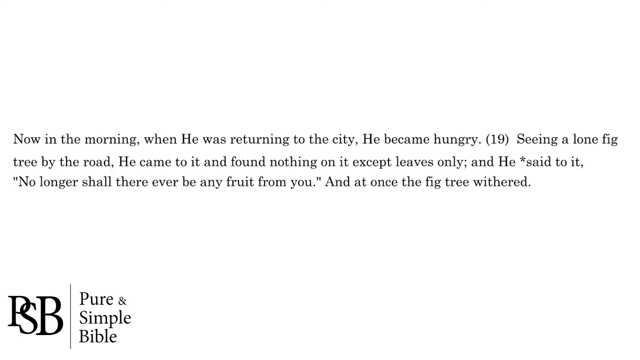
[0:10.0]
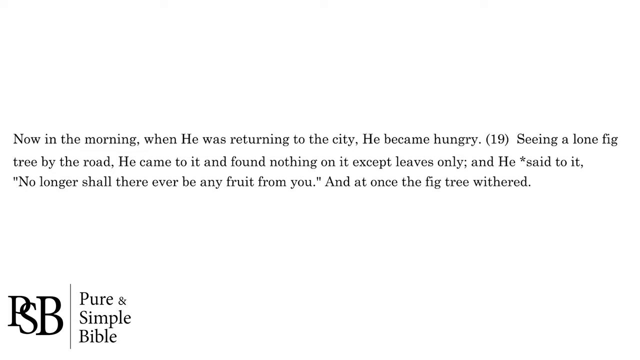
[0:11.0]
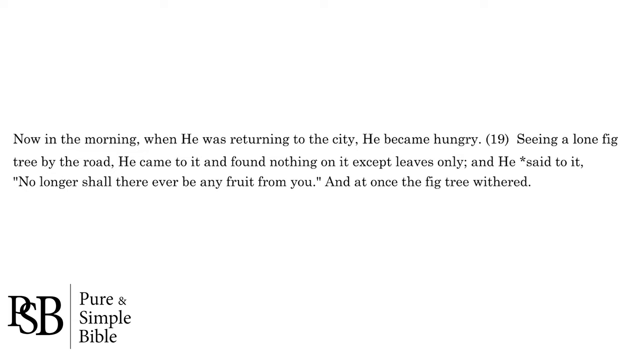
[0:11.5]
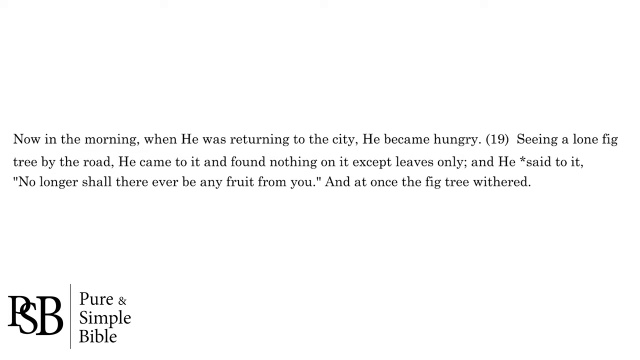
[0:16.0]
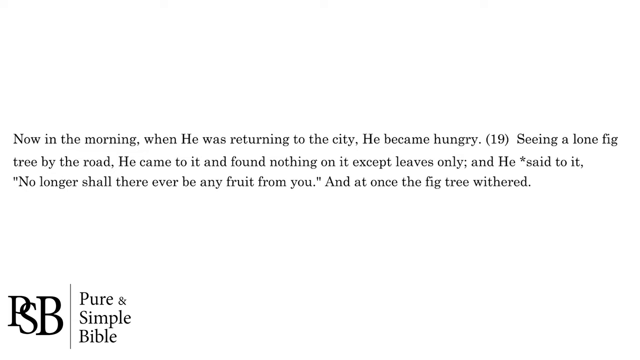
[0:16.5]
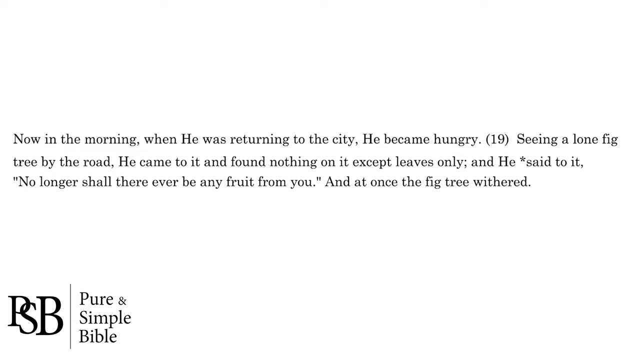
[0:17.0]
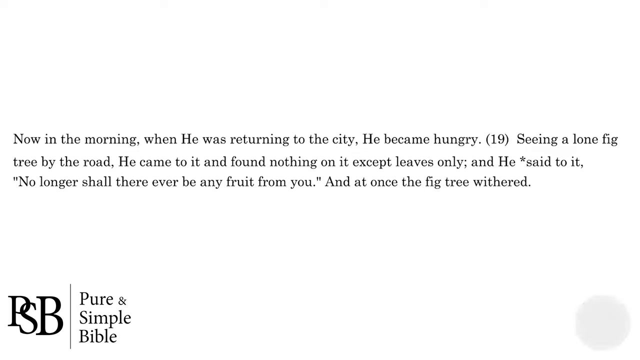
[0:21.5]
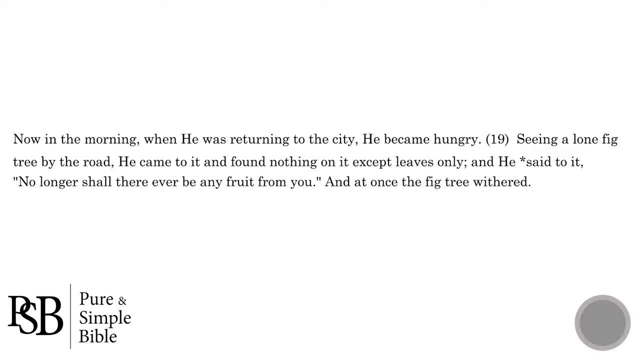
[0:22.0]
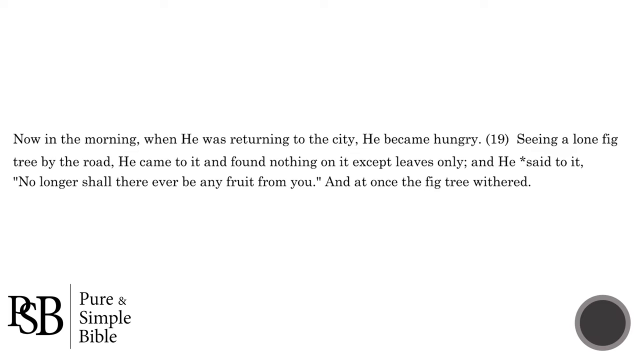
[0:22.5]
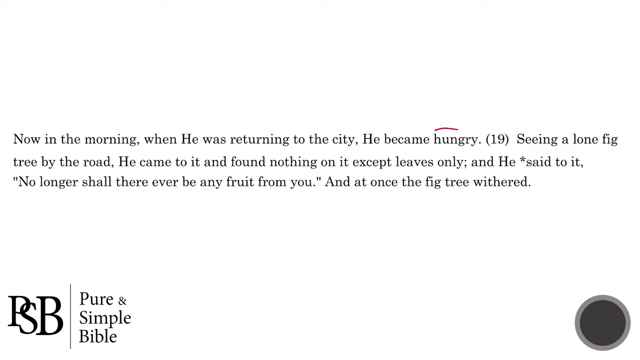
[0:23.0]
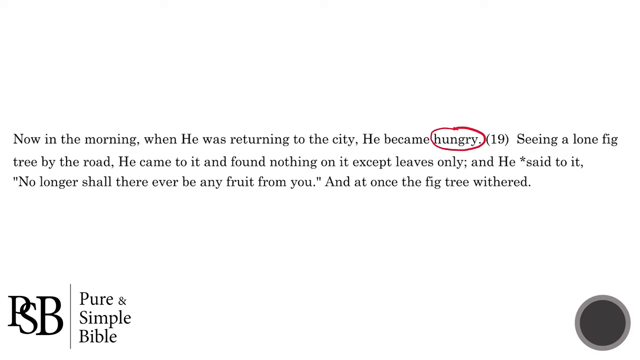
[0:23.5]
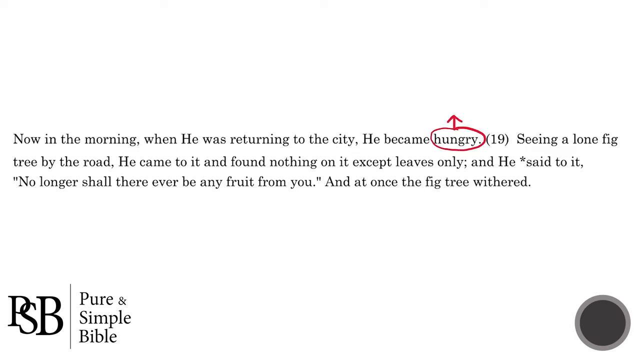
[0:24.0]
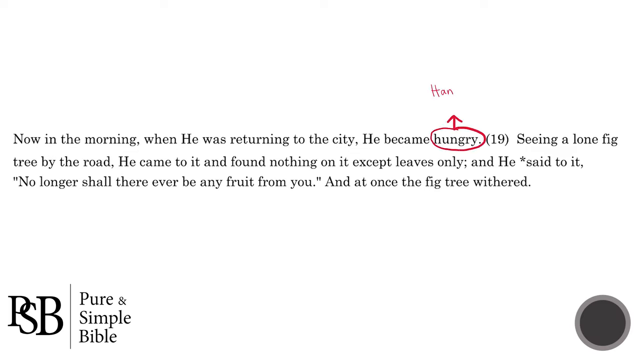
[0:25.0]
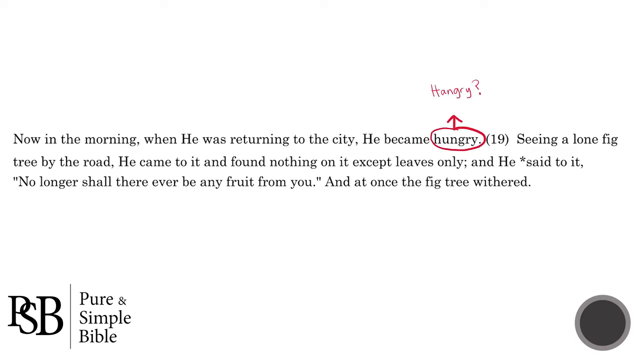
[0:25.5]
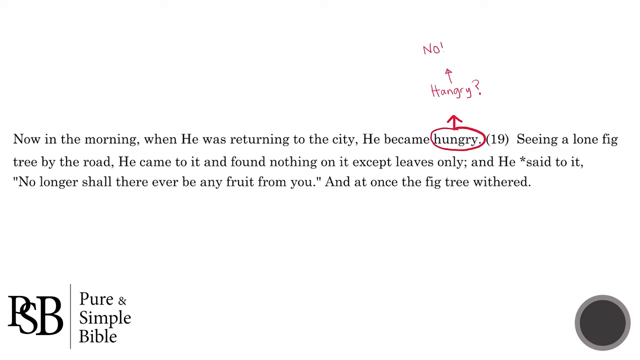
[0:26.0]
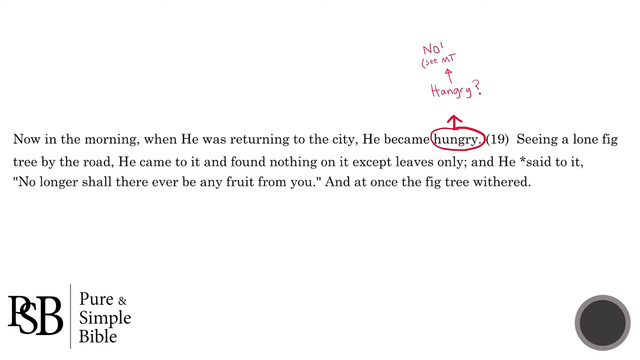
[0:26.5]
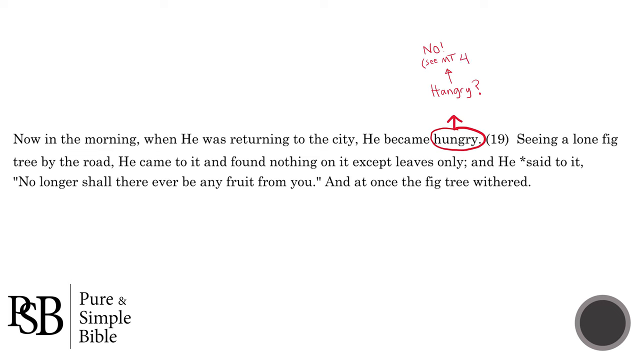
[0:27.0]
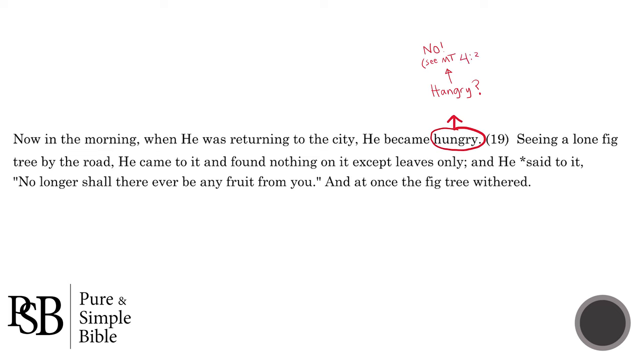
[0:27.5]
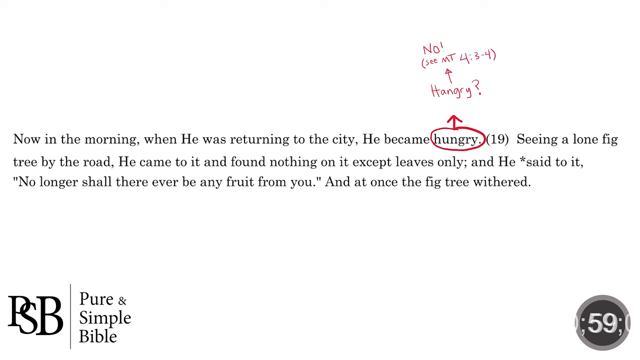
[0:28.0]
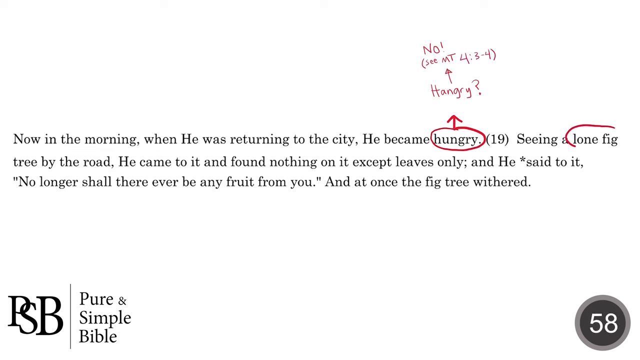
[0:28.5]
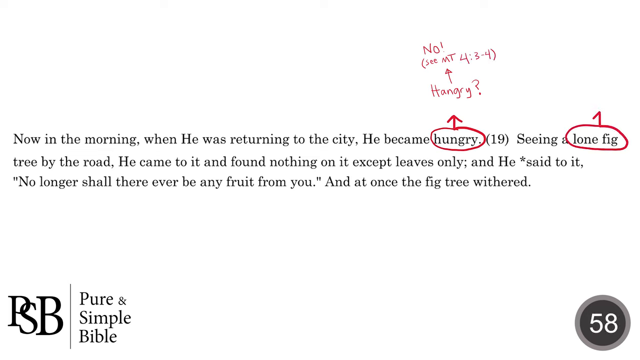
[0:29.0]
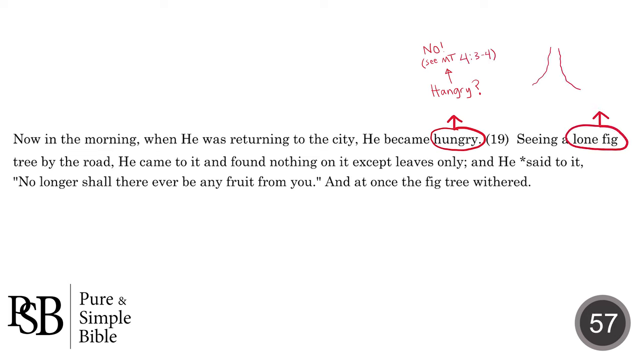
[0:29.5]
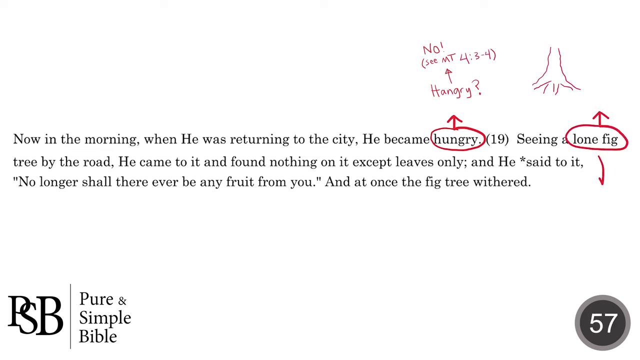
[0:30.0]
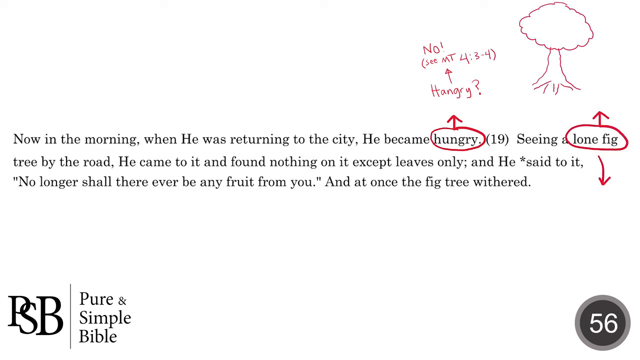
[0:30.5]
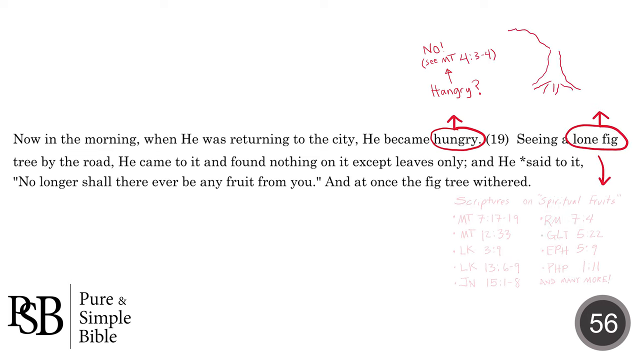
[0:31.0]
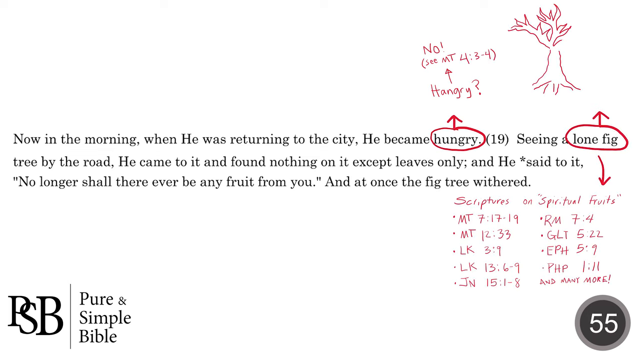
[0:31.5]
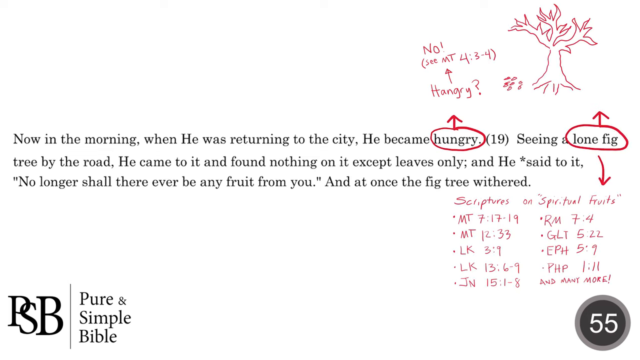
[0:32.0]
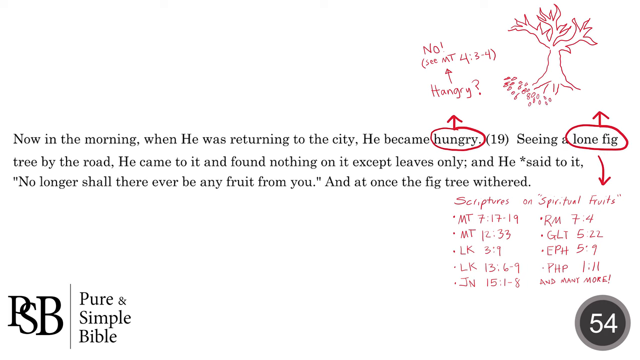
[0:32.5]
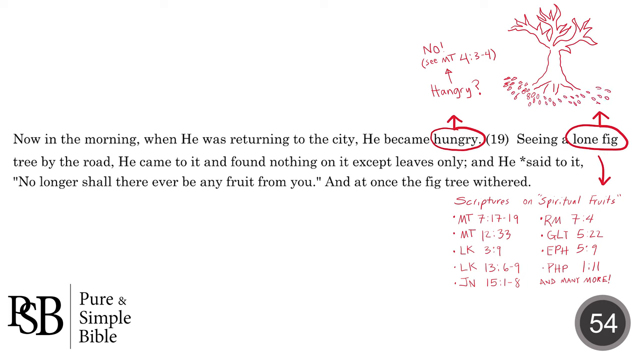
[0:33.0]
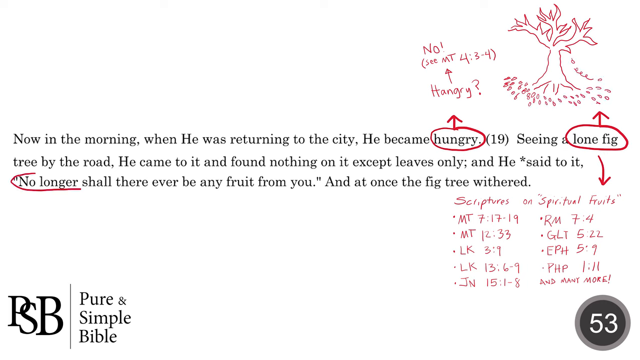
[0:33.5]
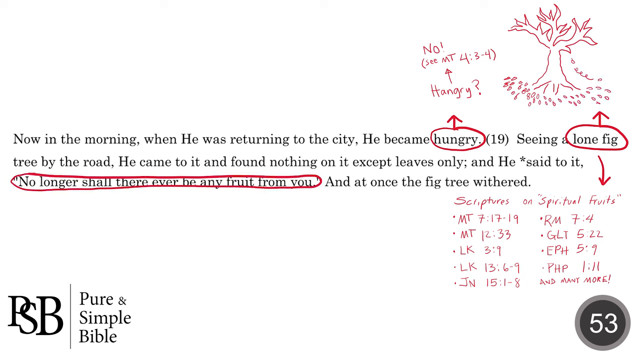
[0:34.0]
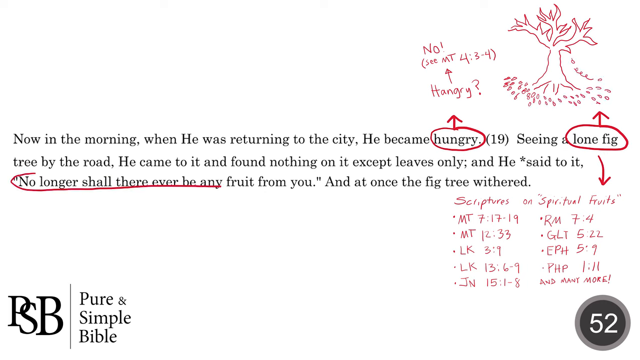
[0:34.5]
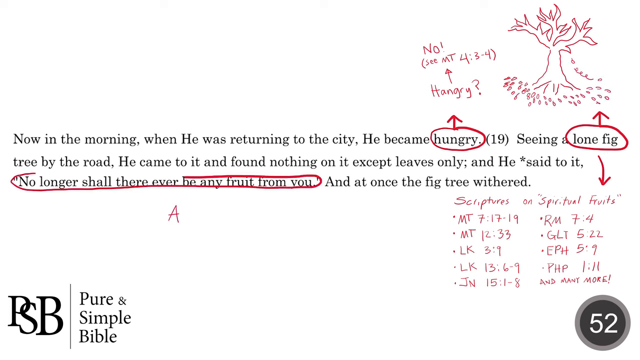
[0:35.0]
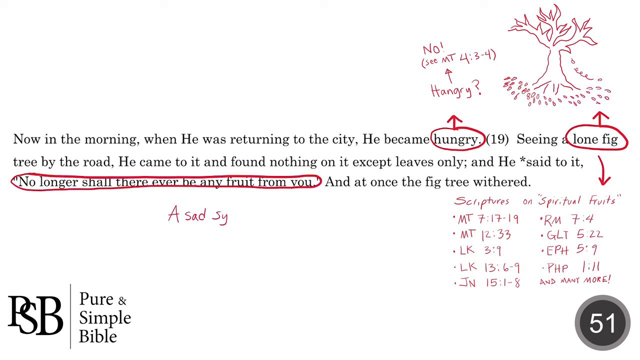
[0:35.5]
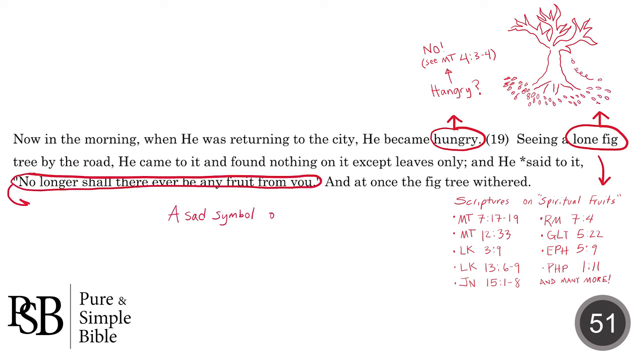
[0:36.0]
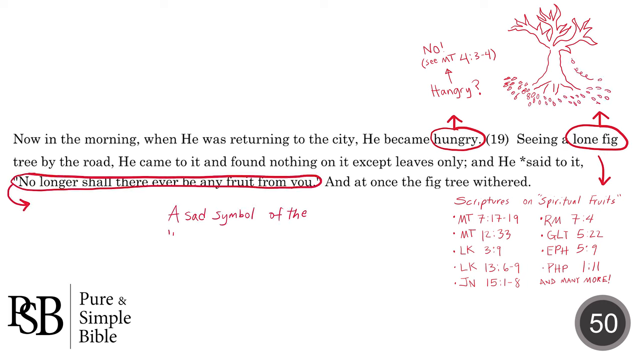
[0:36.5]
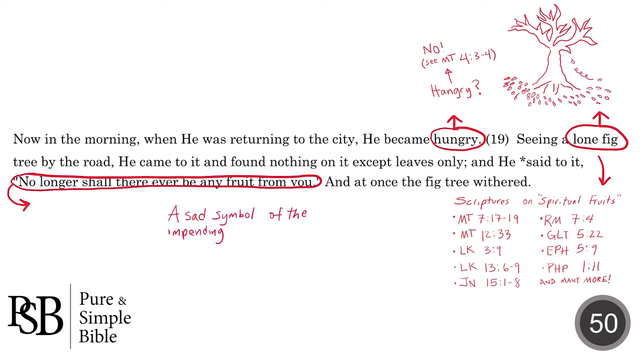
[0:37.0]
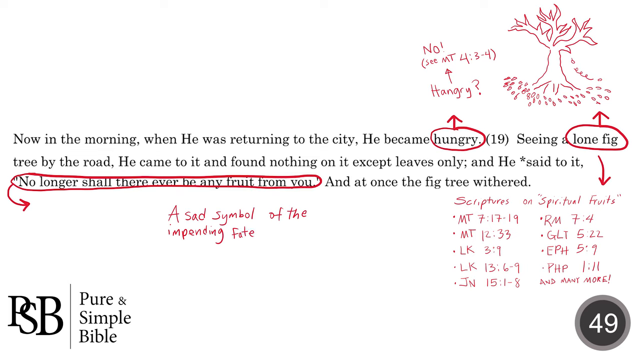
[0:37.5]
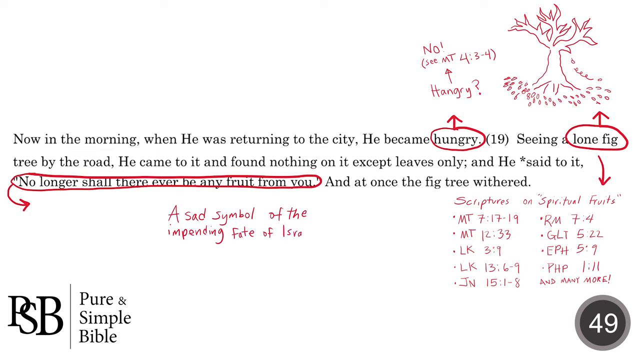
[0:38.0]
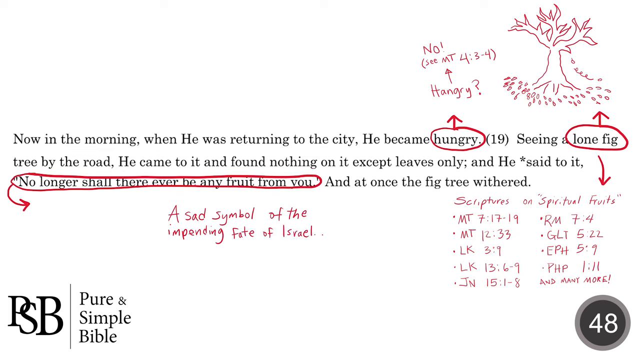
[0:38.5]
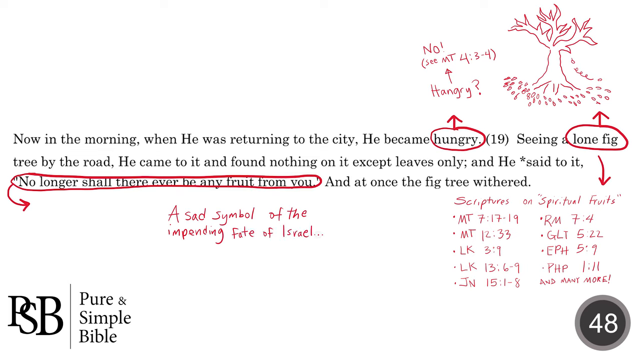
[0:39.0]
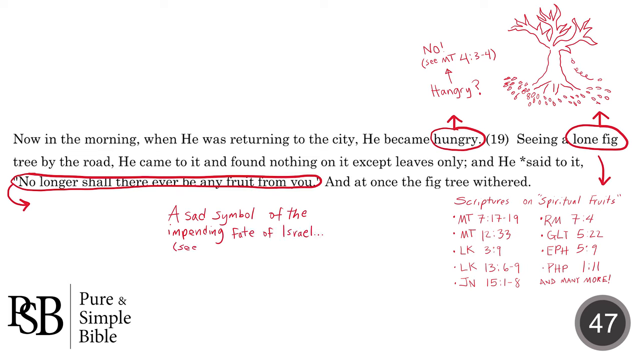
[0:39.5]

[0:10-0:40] The Bible passage remains on the screen, reading: "now in the morning when he was returning to the city, he became hungry, 19, seeing a lone fig tree by the road, he came to eat and found nothing on it except leaves only. And he said to it, no longer shall there ever be any fruit from you. And at once the fig tree withered." Someone marks up the verses with a red pen: first the word "hungry" is circled, then "lone fig". Notes are written beside them; next to "hungry" the note reads "see Matthew 4, verse 3 to 4", and by "lone fig" a tree is drawn with some leaves that have fallen from it. Neither the hand nor the person doing the writing is visible.